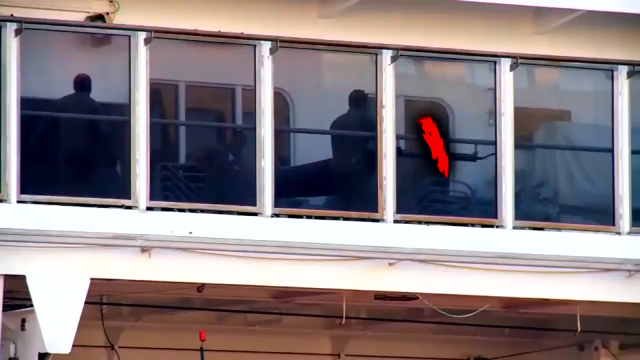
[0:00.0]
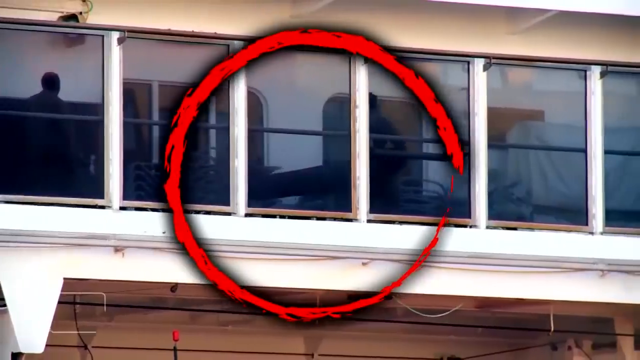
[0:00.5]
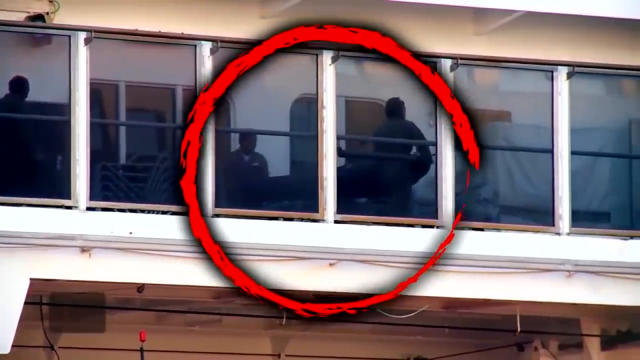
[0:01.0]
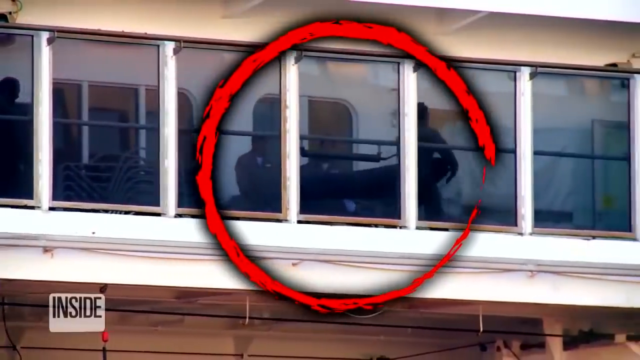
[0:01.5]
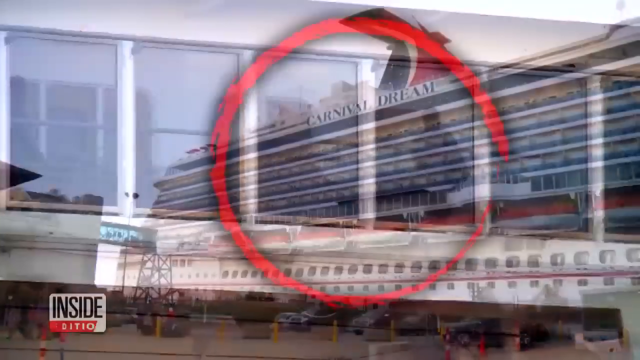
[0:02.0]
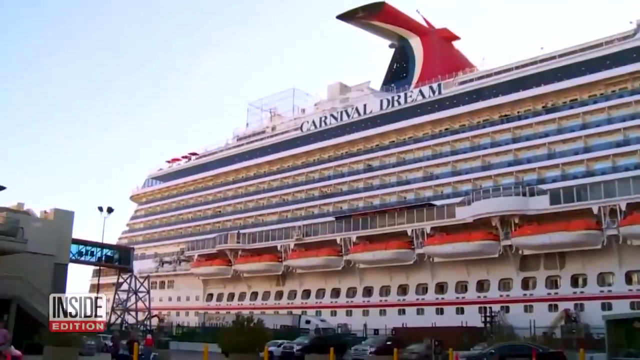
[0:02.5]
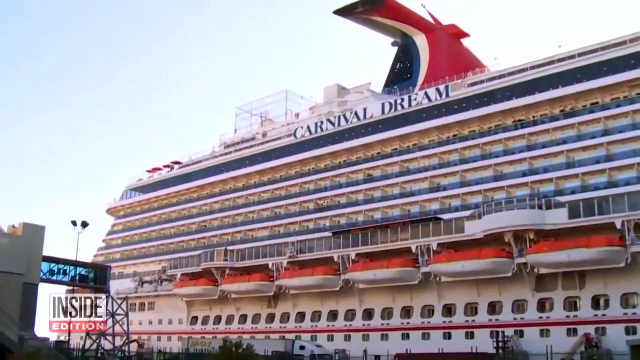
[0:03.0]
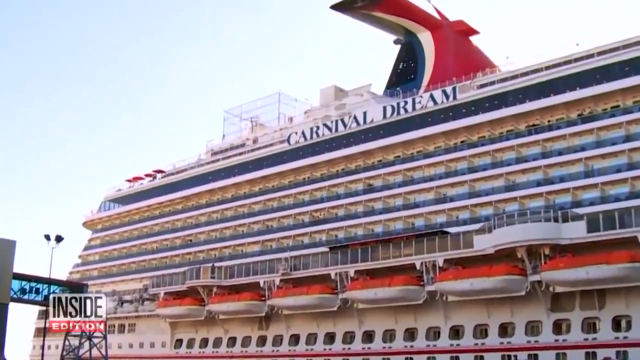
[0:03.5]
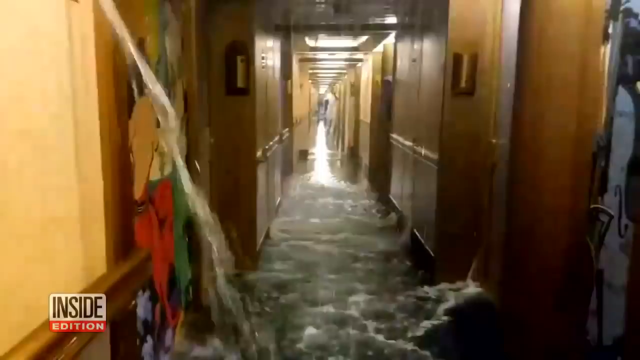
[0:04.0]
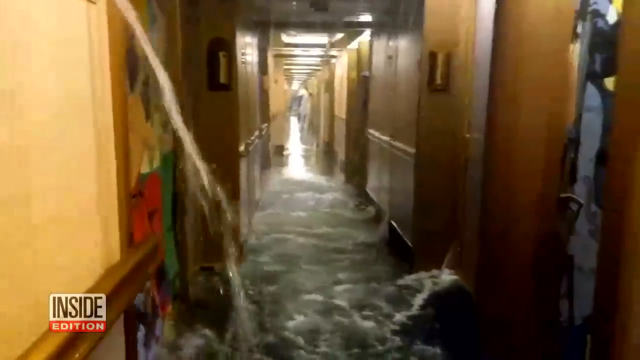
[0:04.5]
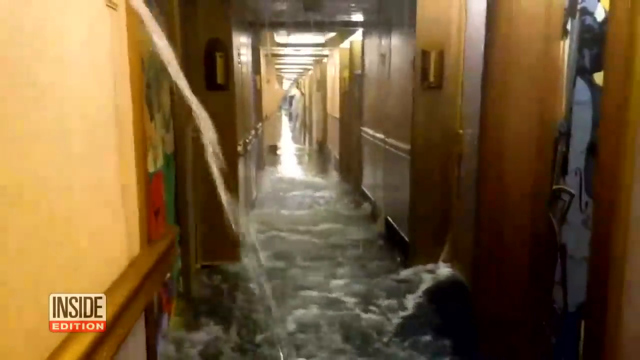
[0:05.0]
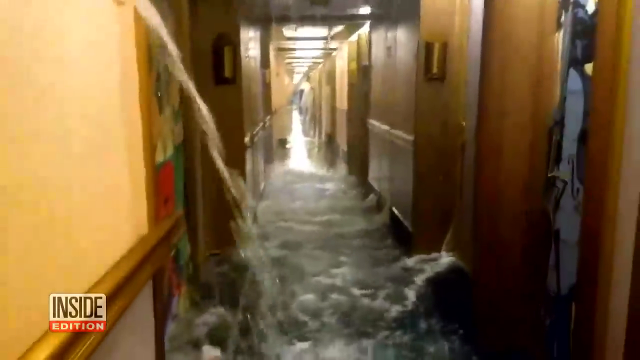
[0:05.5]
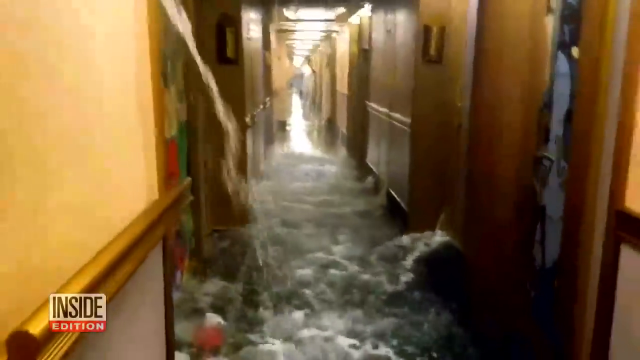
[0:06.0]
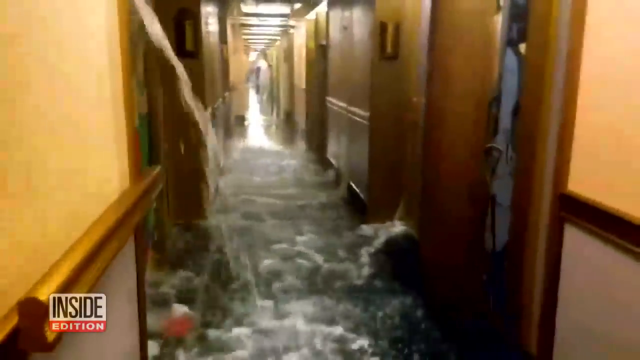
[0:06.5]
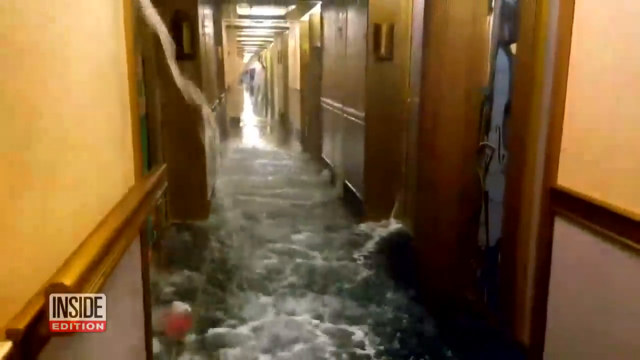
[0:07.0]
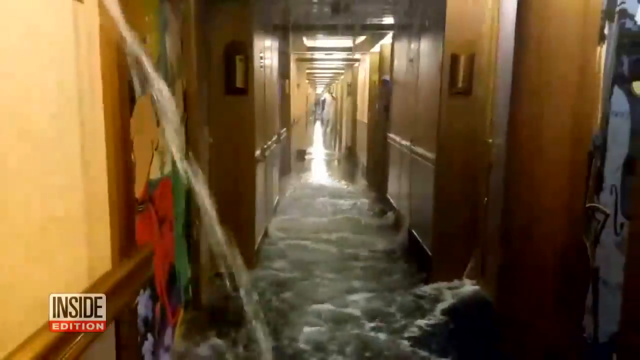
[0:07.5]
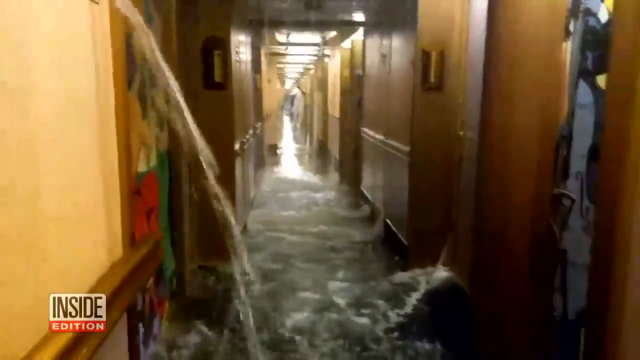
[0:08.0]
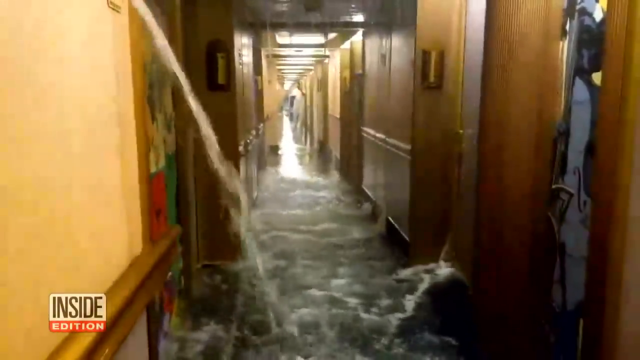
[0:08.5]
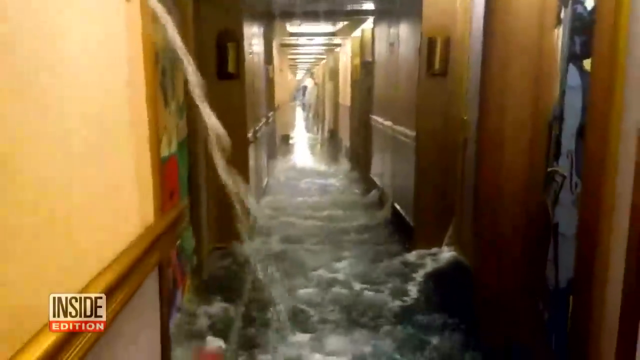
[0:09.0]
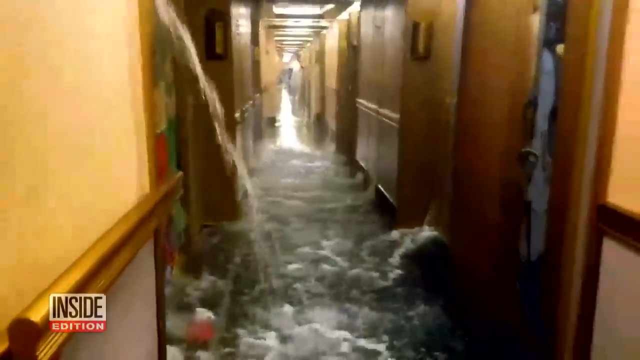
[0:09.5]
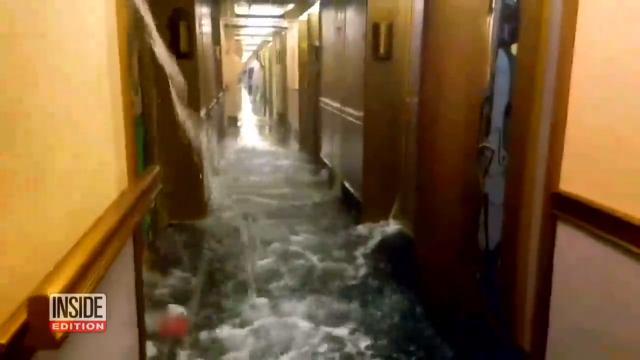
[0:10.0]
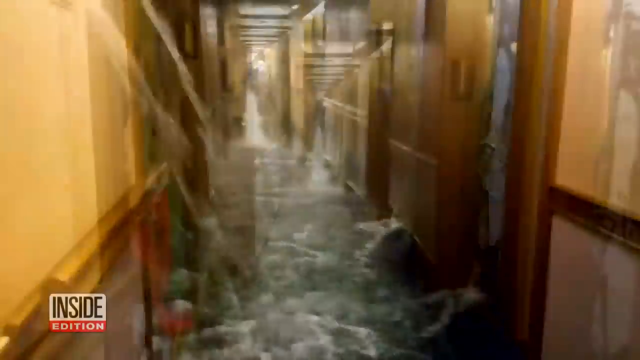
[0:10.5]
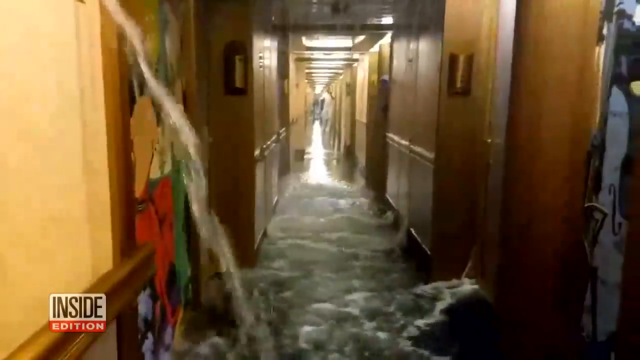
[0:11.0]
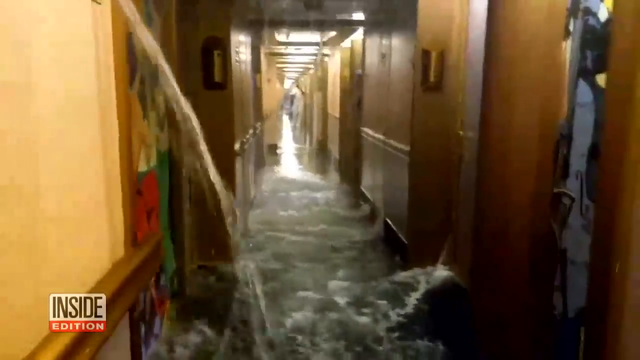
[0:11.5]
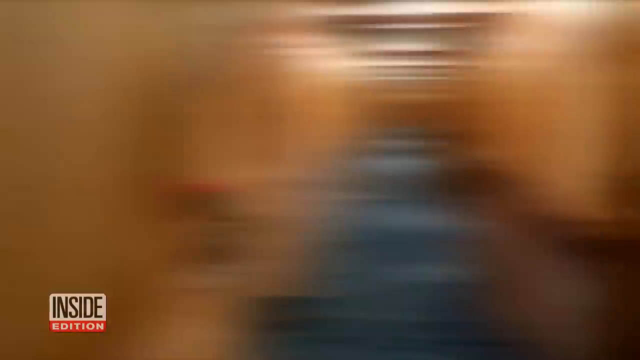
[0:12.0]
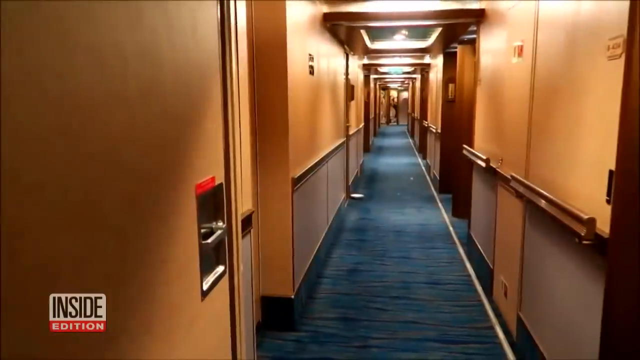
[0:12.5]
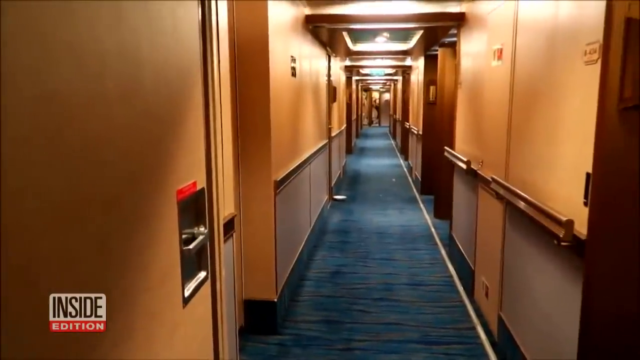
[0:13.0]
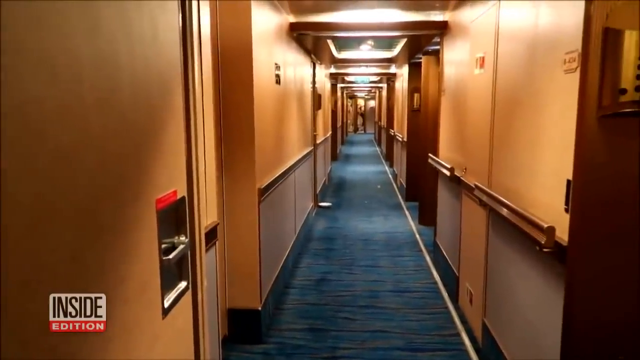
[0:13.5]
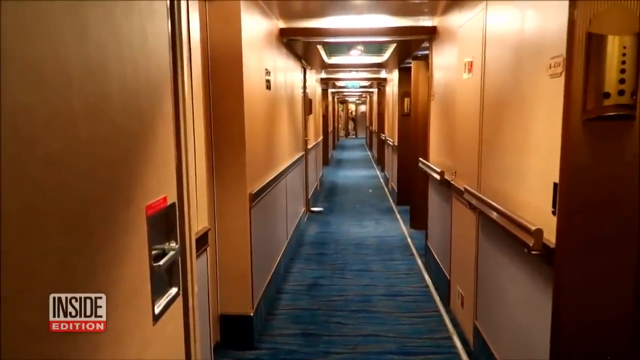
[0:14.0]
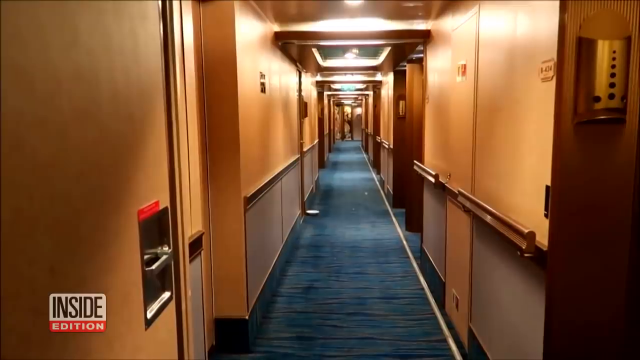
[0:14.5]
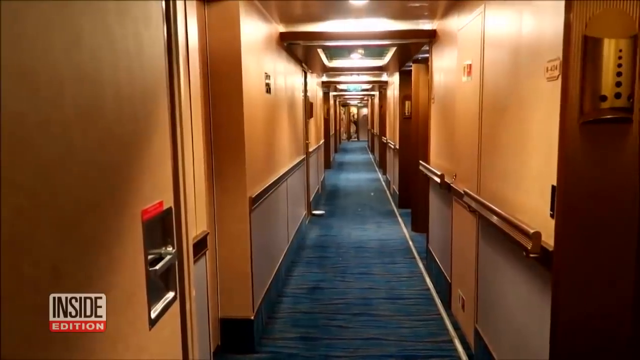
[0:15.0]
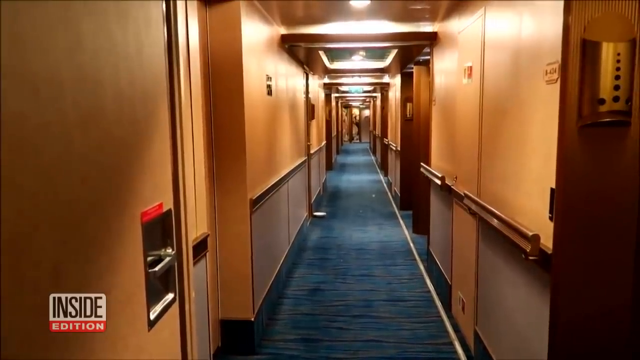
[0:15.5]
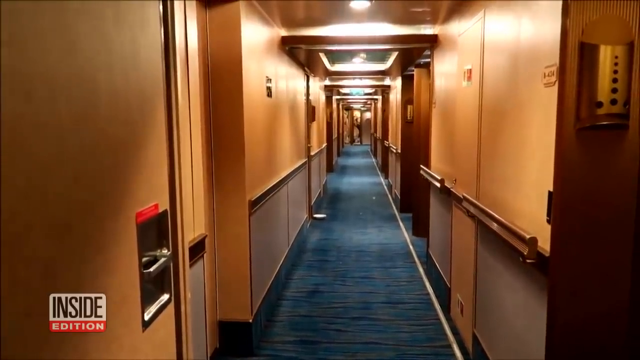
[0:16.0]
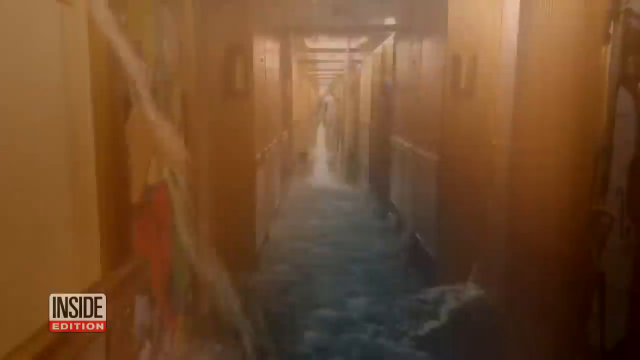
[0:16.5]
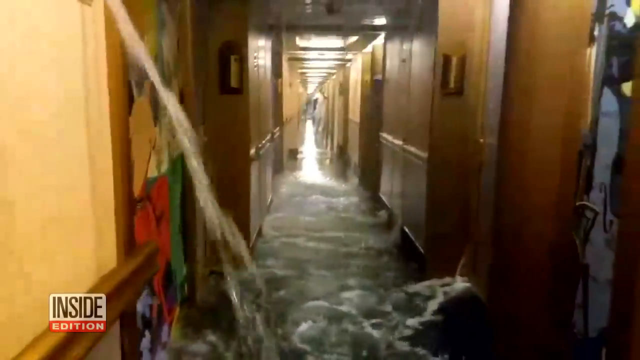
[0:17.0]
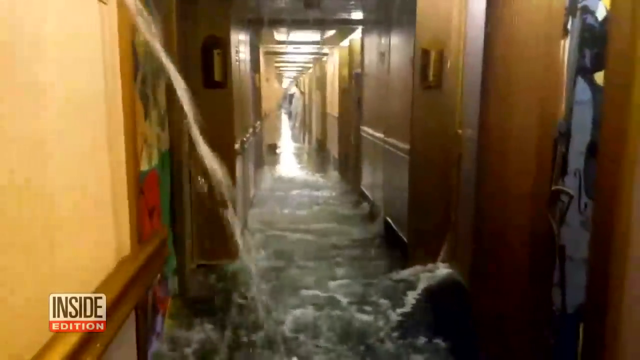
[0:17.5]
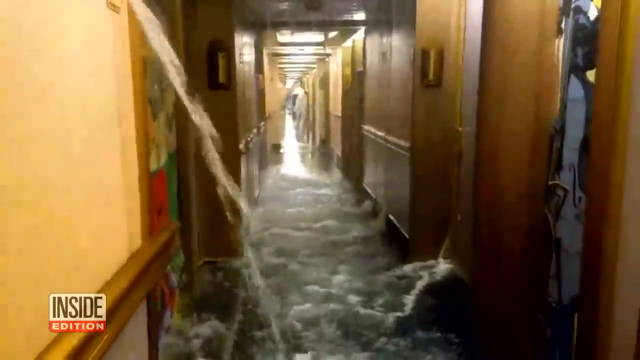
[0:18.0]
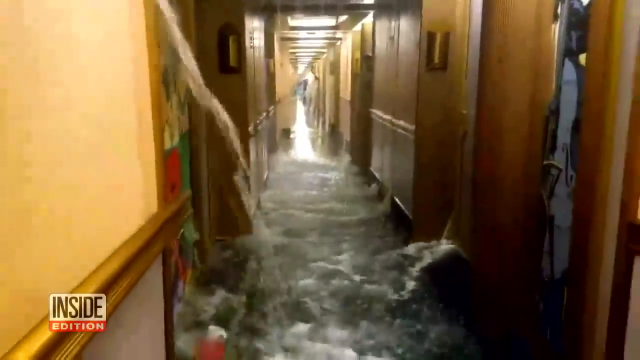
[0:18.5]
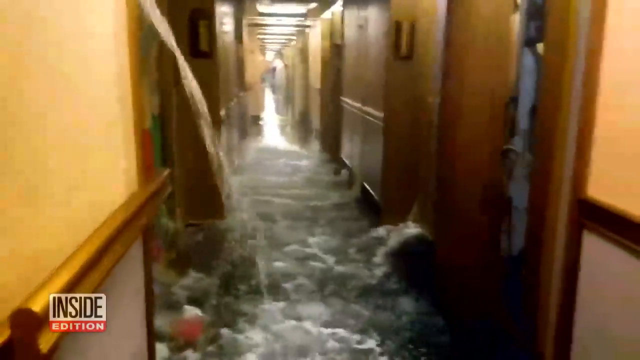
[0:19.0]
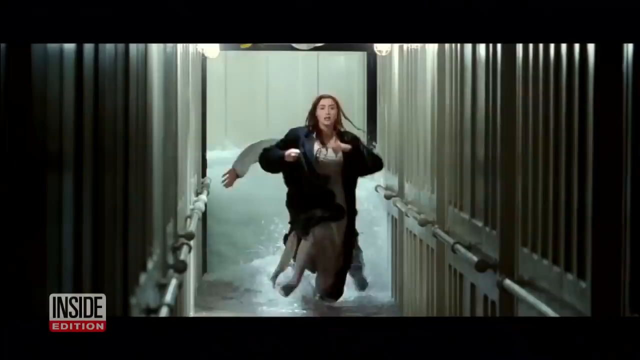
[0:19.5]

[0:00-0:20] The video is from, or at least presented by, Inside Edition. It shows a large cruise ship that appears to be taking in water: a room, or at least a hall, with several doors shows water flowing through it. Within the continuous shot, the exact same room is then seen not flooded. Toward the end, a movie clip from Titanic appears, in which an actress seems to be running through a hall as if water is rushing through. As the video continues to pan, the reflection of the water entering the cruise ship is shown pouring down from the far end of the hall to its beginning; there are no individuals, just the hall with several doors opening. On the far right side, in the rushing water, one individual appears to be poking their head out. As the camera also pans to the dry area, the flooring of the dry hall appears to be blue, while the exterior of the hall appears to be a copperish color.